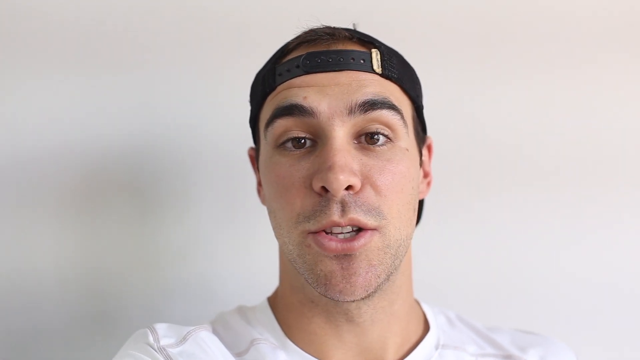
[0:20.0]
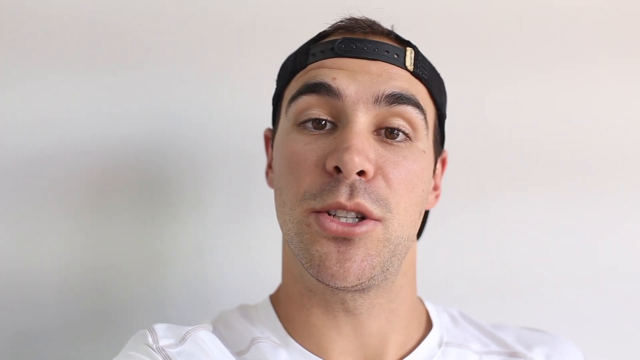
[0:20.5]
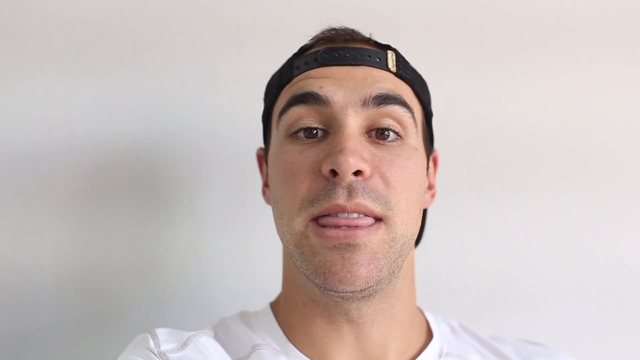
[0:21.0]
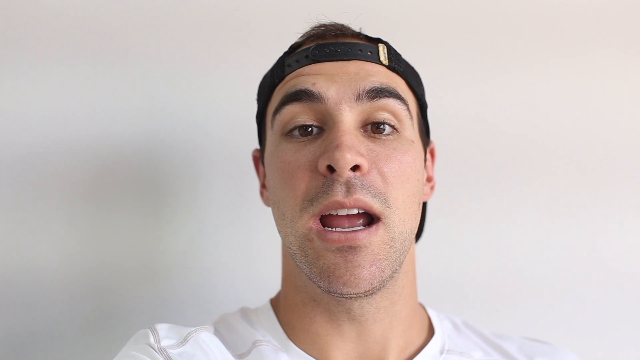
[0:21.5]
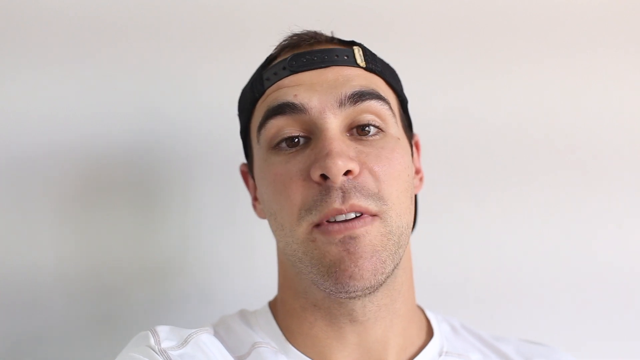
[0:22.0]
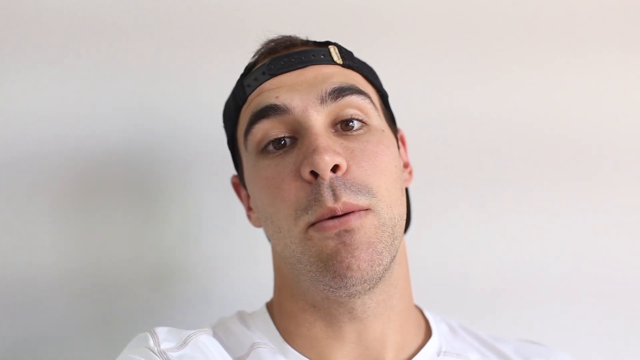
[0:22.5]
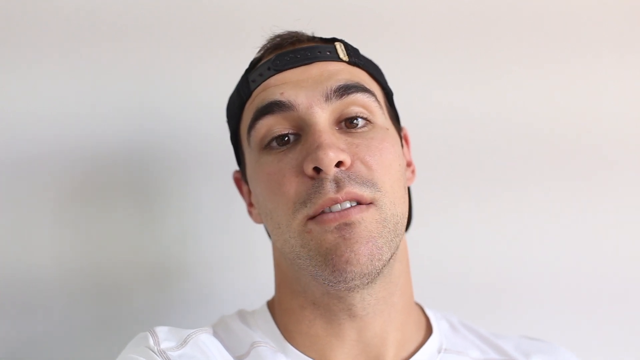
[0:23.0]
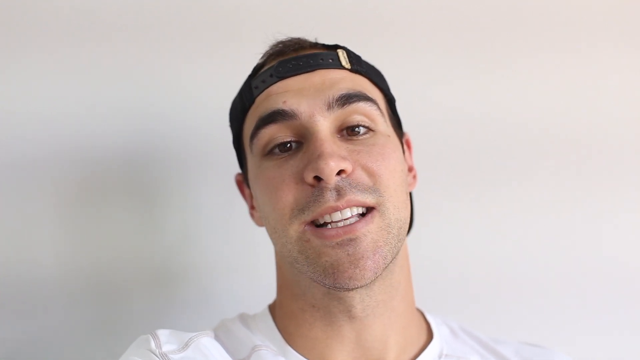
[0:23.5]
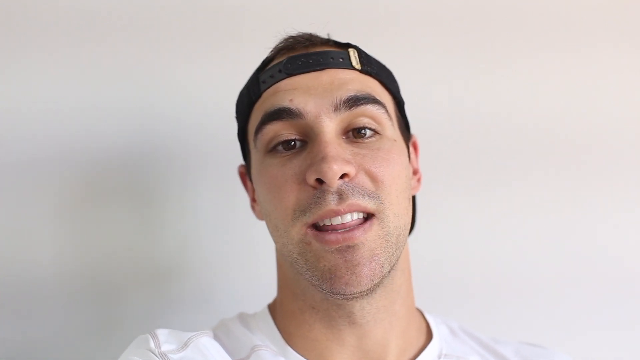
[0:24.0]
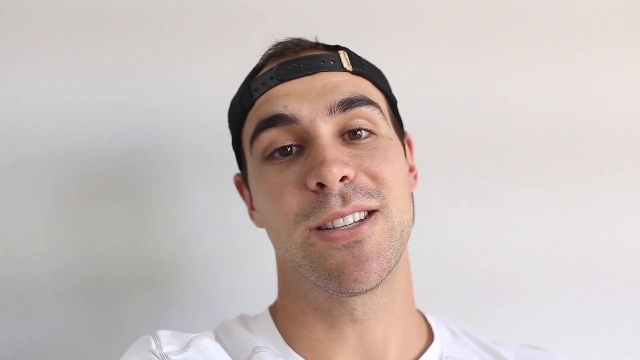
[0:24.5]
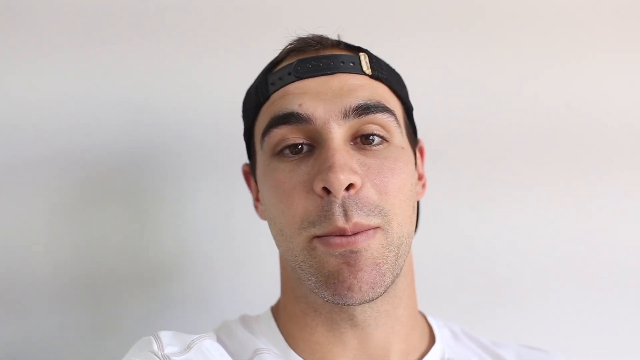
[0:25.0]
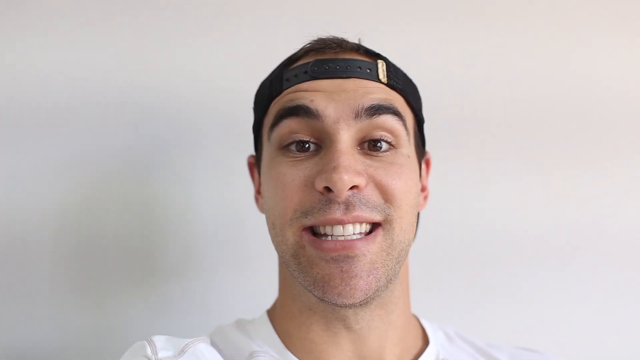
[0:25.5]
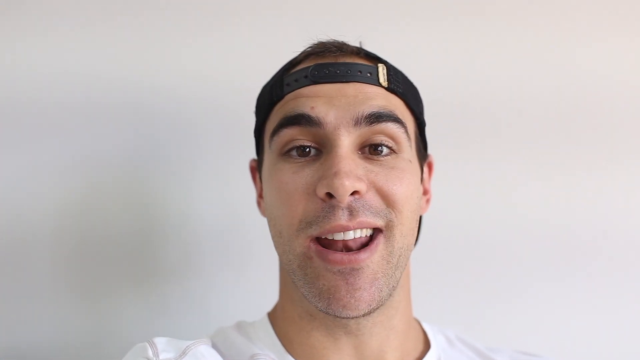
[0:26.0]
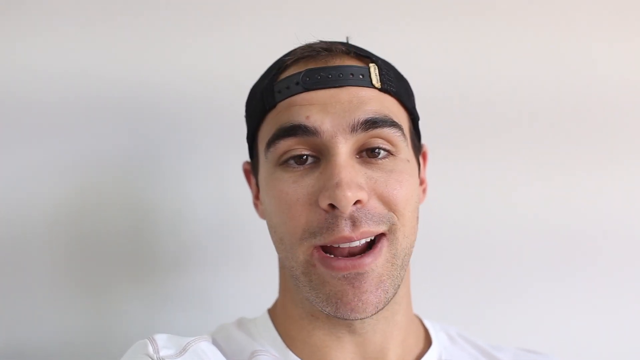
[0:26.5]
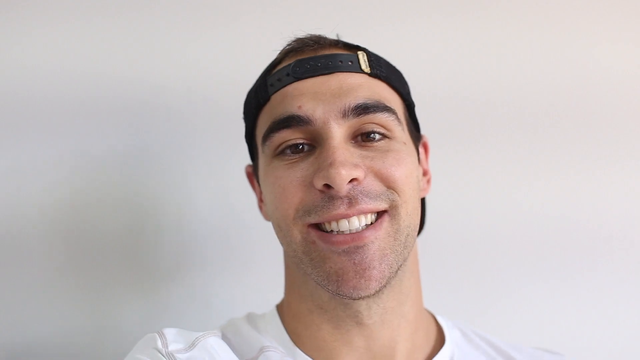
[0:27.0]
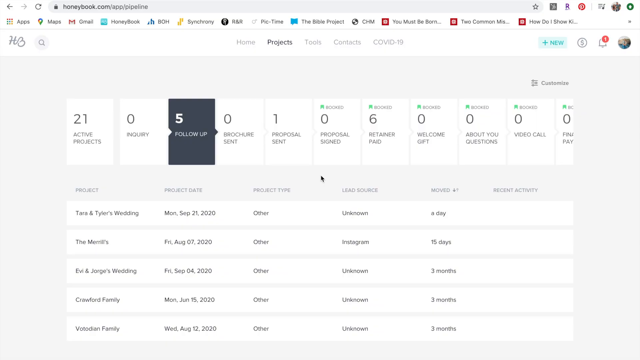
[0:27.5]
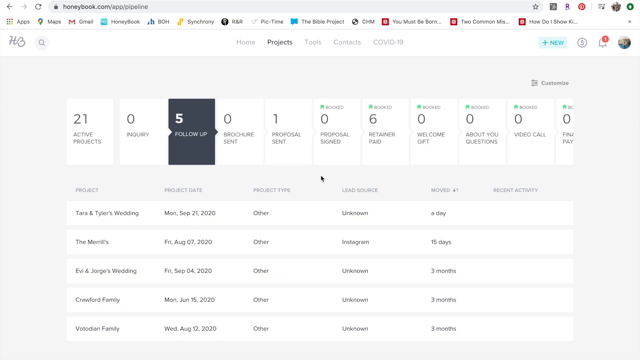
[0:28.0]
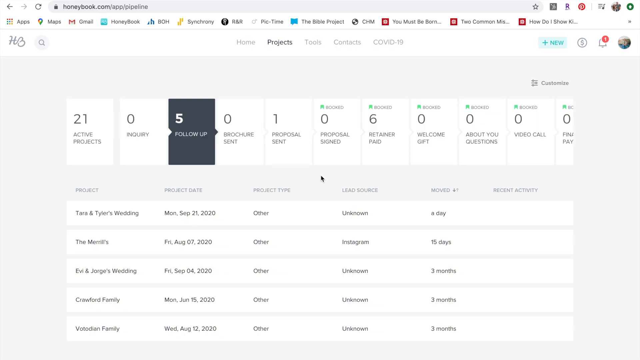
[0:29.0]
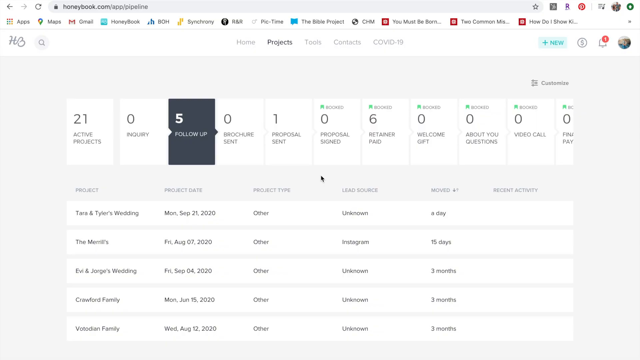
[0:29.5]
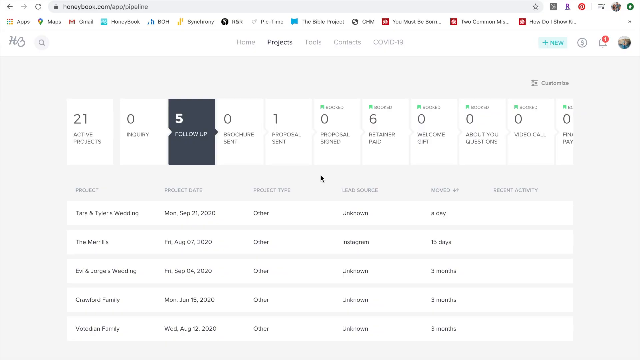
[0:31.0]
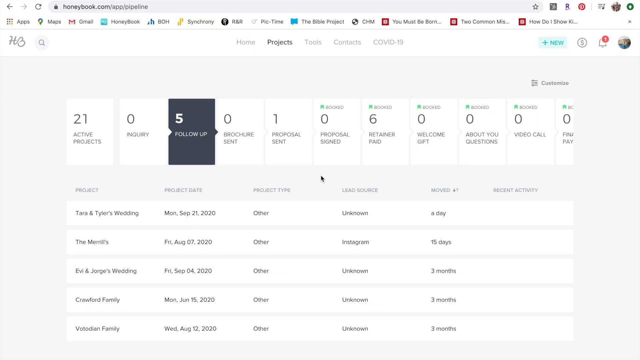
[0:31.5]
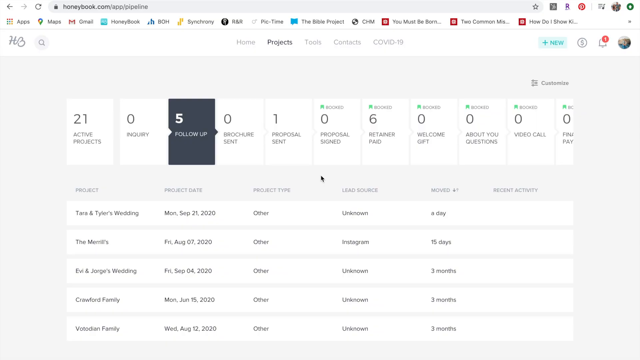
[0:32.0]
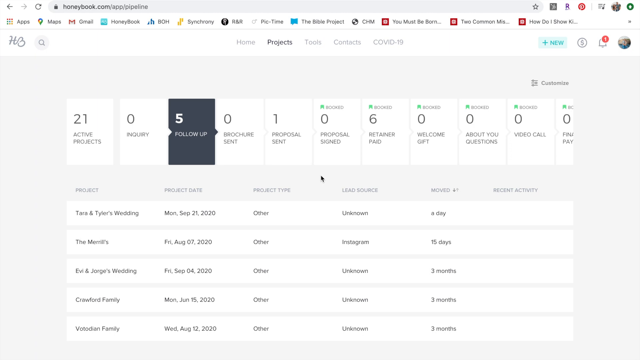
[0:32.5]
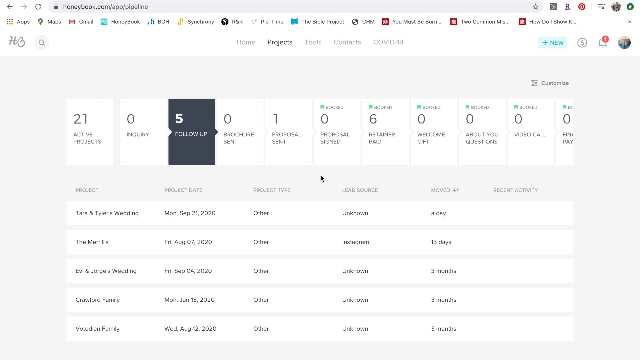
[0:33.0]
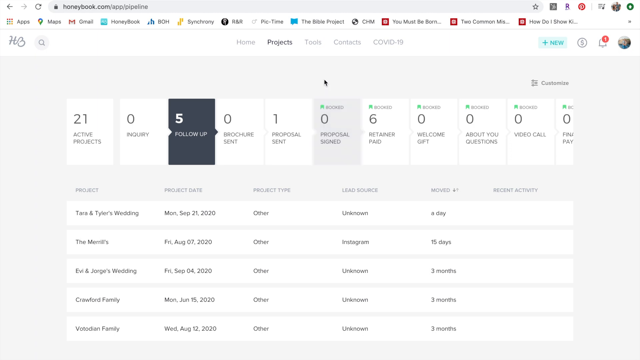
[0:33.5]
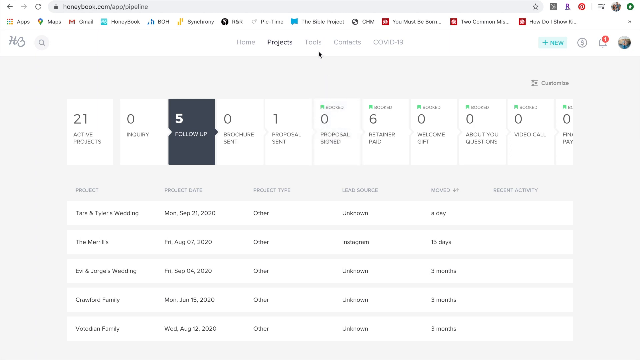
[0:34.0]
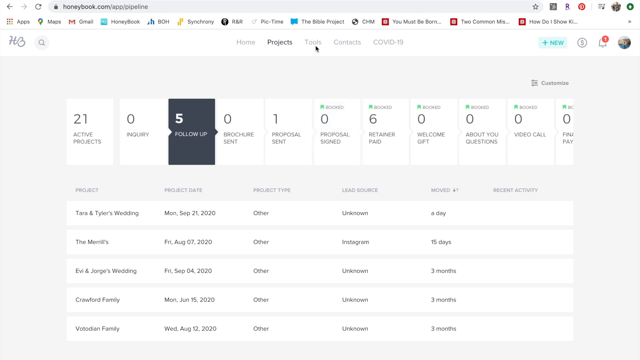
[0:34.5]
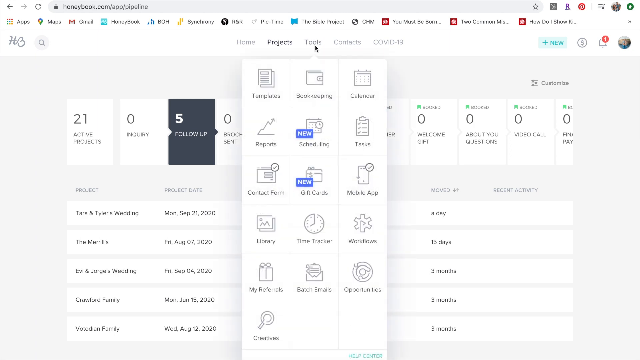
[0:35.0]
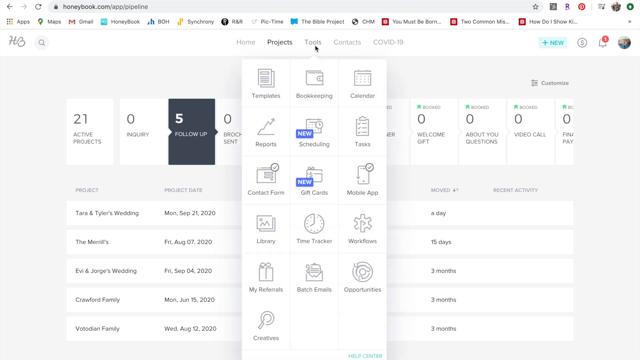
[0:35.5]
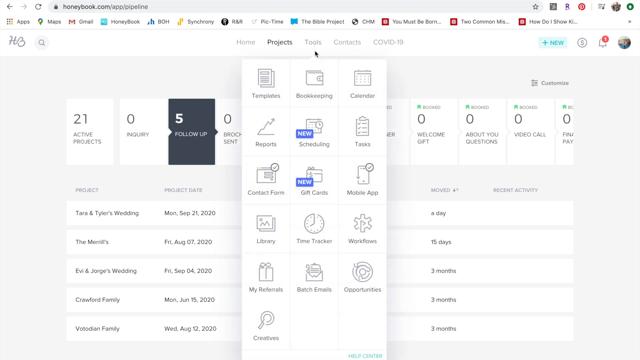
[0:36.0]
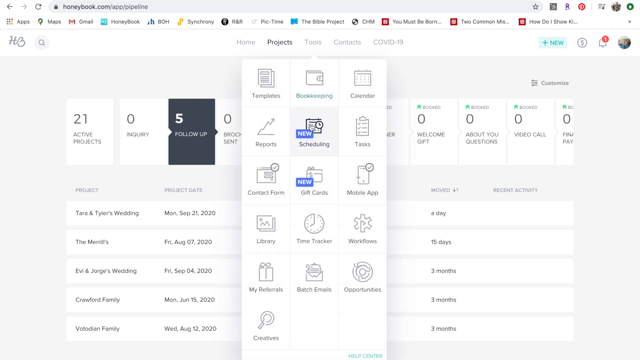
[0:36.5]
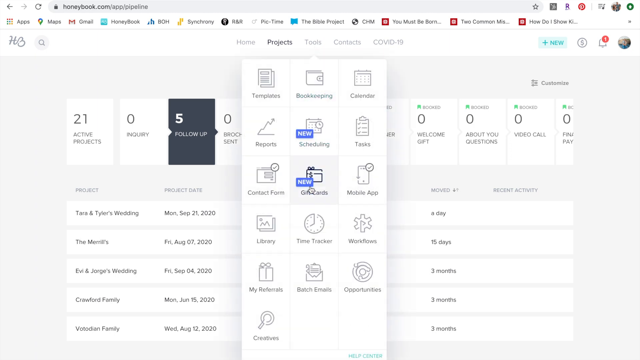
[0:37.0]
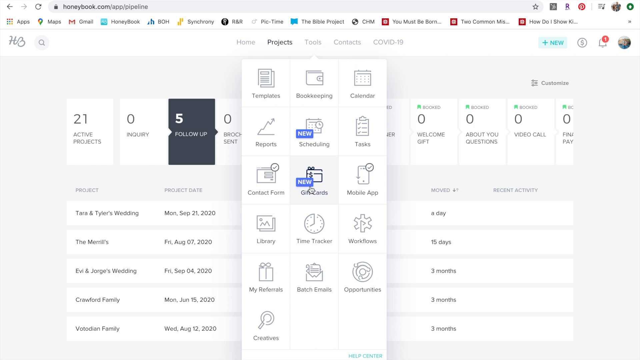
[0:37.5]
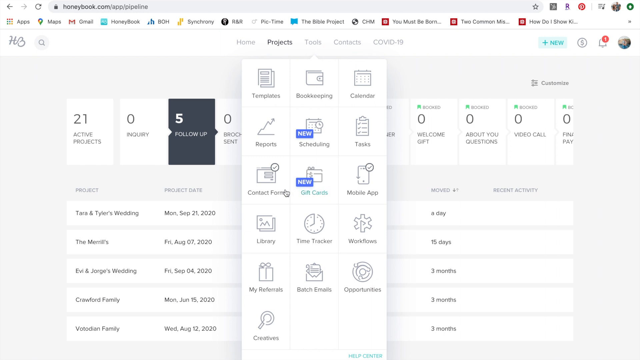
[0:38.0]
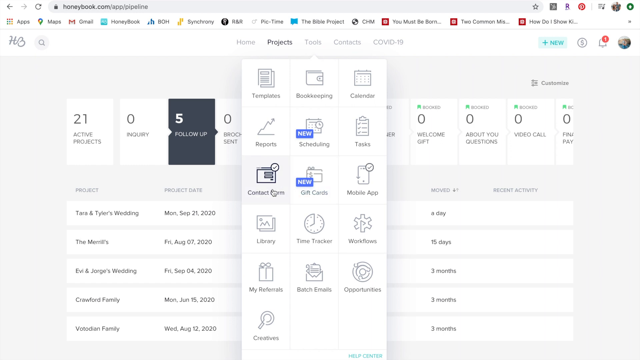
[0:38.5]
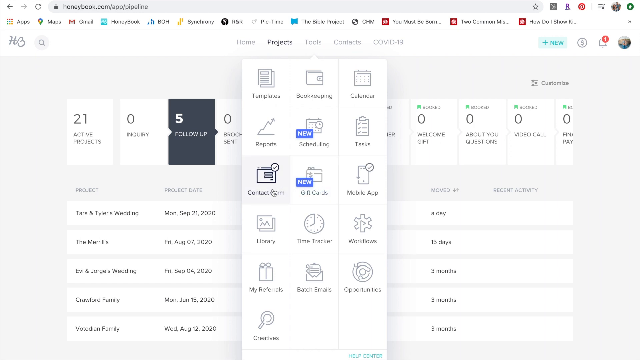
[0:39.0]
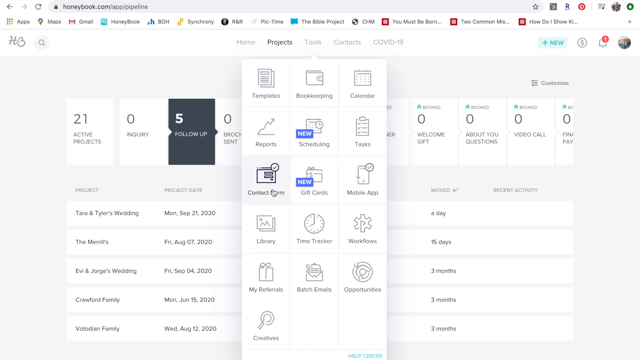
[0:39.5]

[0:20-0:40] In front of a plain white wall, the man in the backwards black baseball cap is in the centre of the screen talking towards the camera, his mouth moving and his head tilting slightly towards his left side. The video then transitions to a computer screen with a web browser open on a website called honeybook.com. The page shows some statistics about projects, like a project work tracker. The user navigates to a header menu at the top and selects the third option, tools, and a drop-down appears with various grids of icons showing different menu options. The cursor moves down the centre grid to the third option, then moves across to the left and selects the left option, contact form.